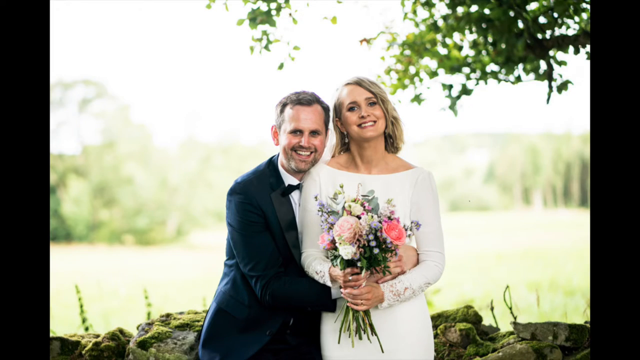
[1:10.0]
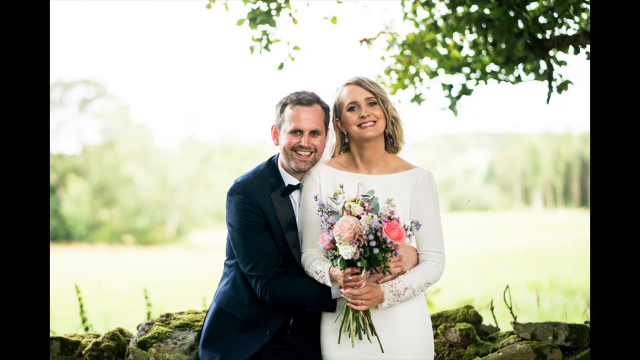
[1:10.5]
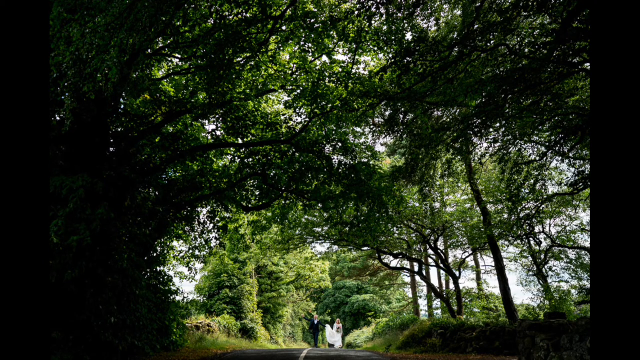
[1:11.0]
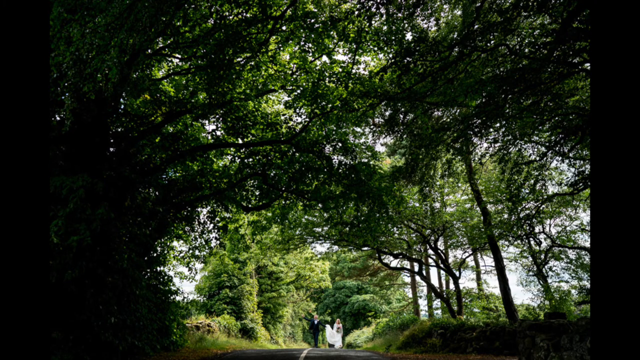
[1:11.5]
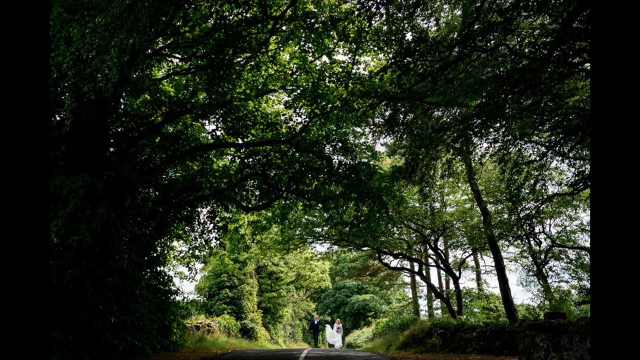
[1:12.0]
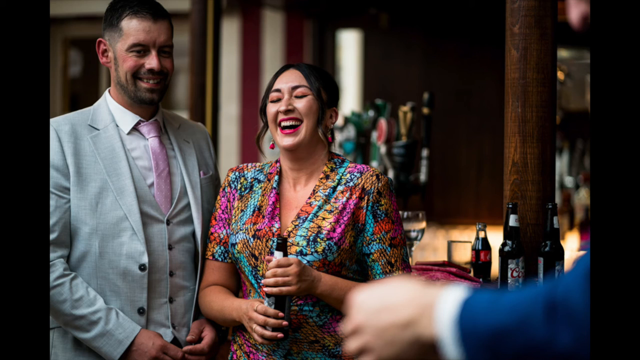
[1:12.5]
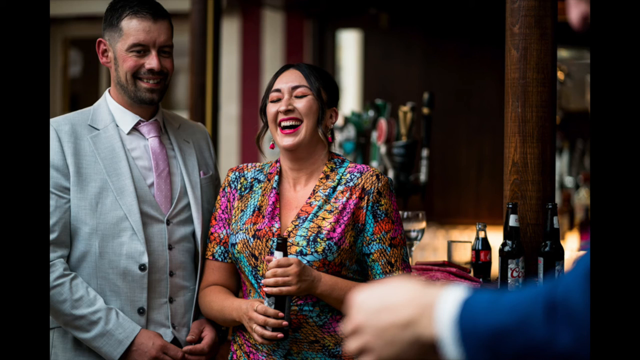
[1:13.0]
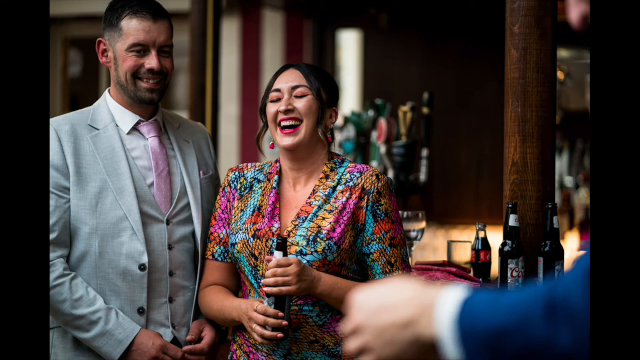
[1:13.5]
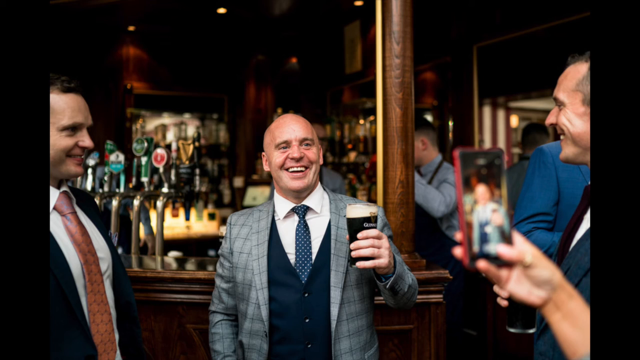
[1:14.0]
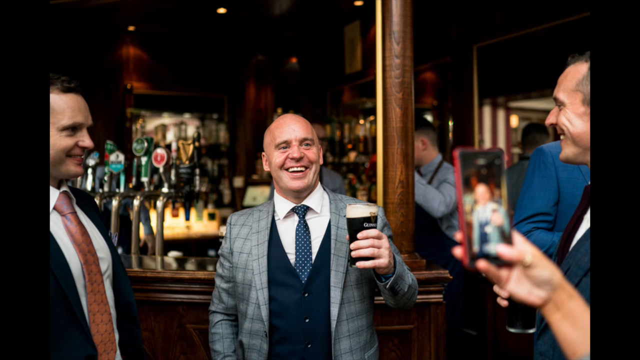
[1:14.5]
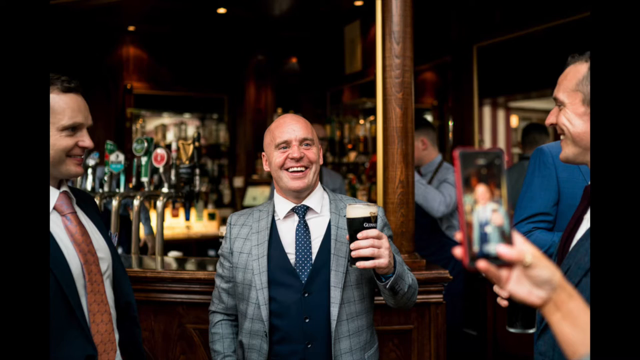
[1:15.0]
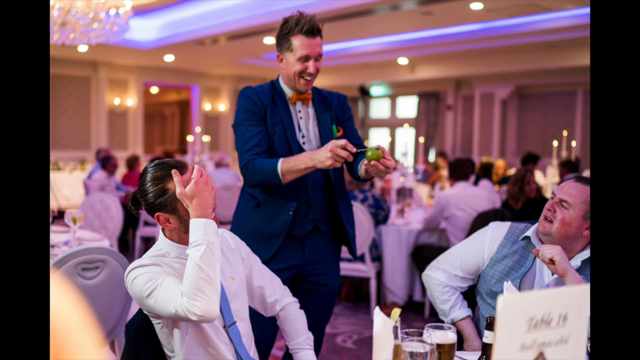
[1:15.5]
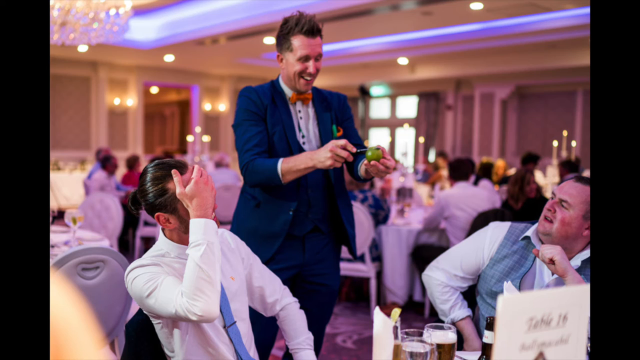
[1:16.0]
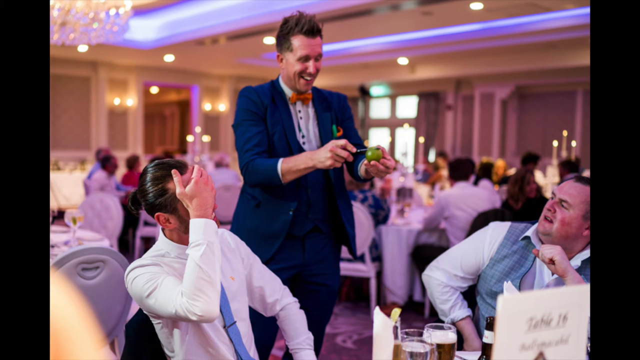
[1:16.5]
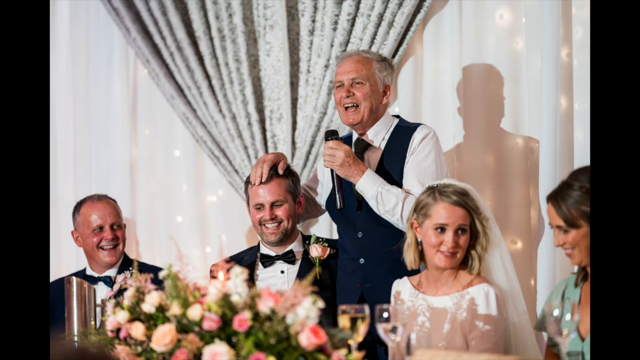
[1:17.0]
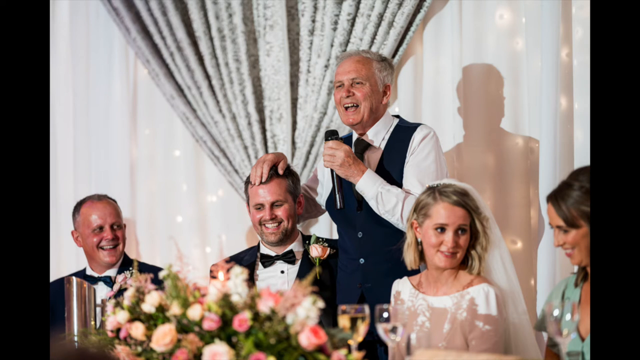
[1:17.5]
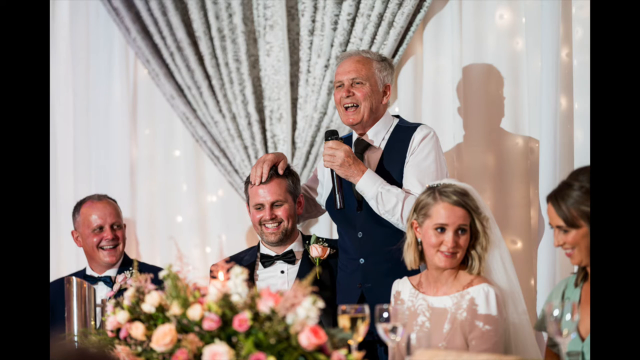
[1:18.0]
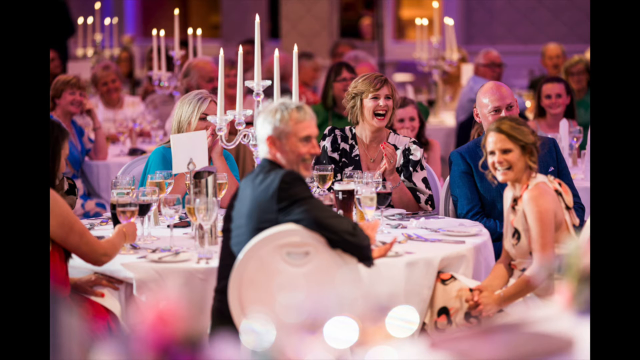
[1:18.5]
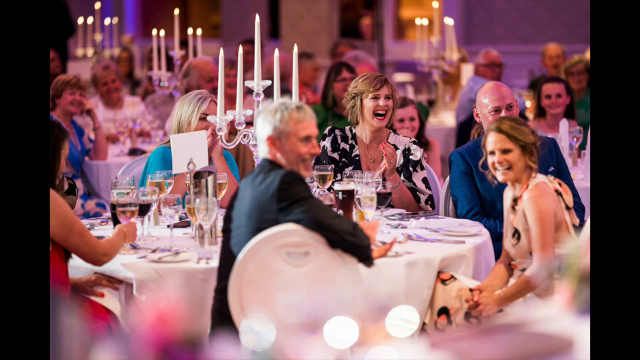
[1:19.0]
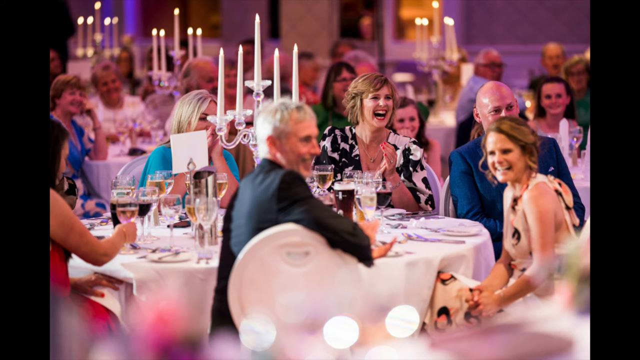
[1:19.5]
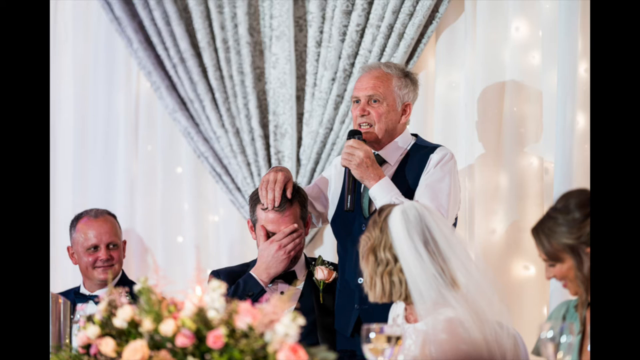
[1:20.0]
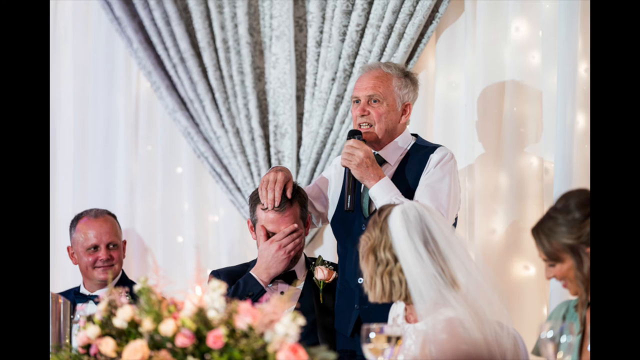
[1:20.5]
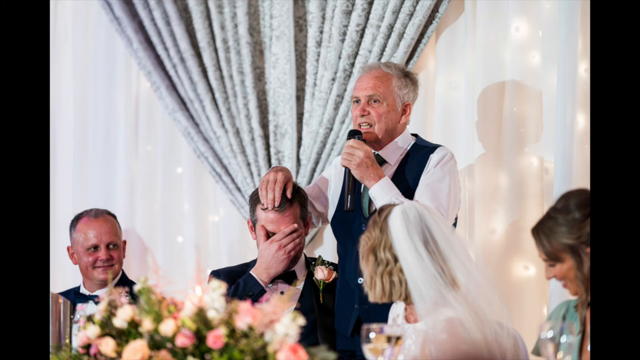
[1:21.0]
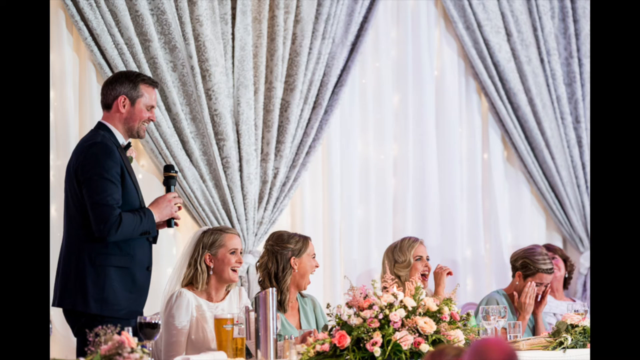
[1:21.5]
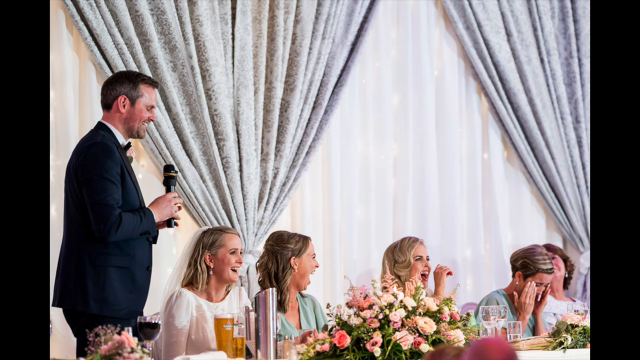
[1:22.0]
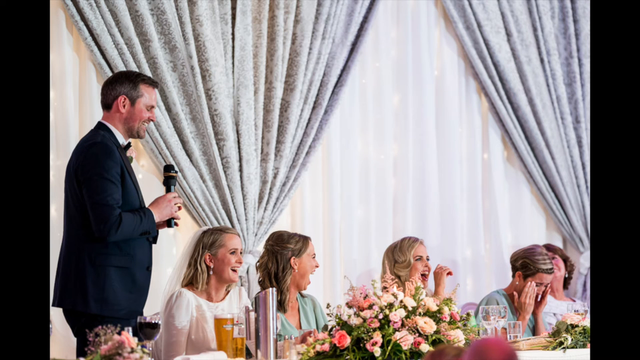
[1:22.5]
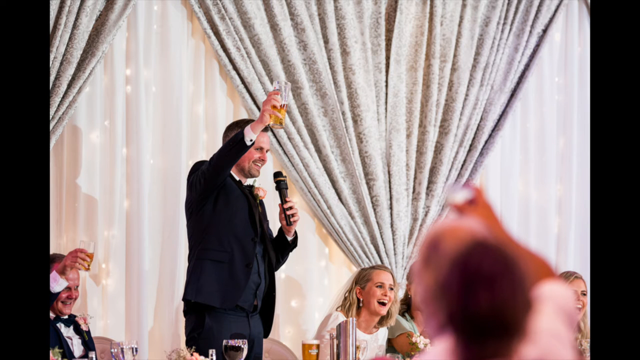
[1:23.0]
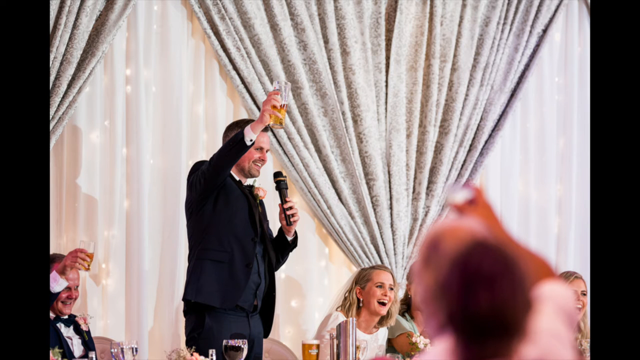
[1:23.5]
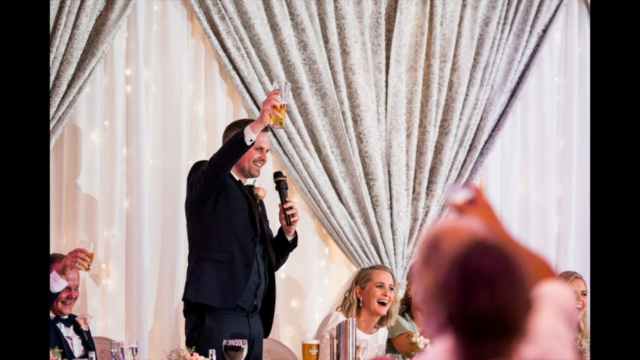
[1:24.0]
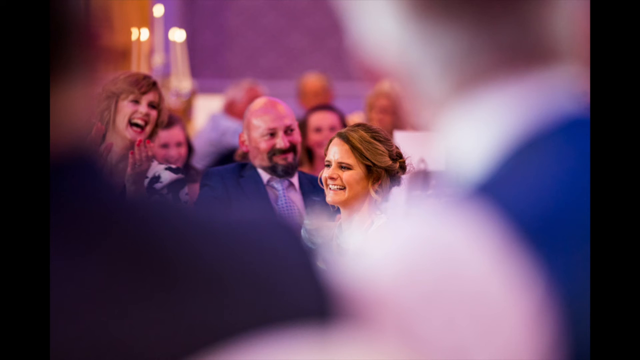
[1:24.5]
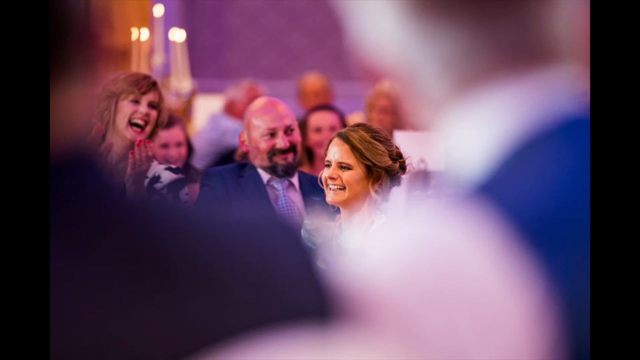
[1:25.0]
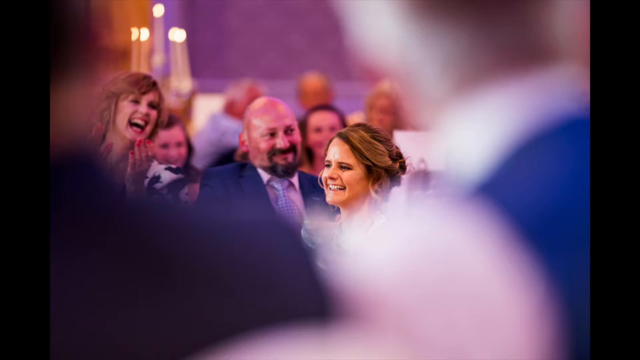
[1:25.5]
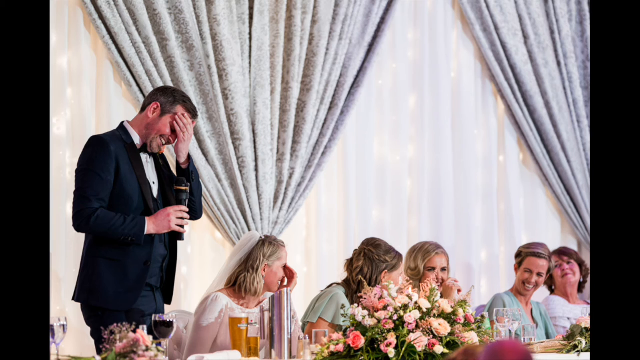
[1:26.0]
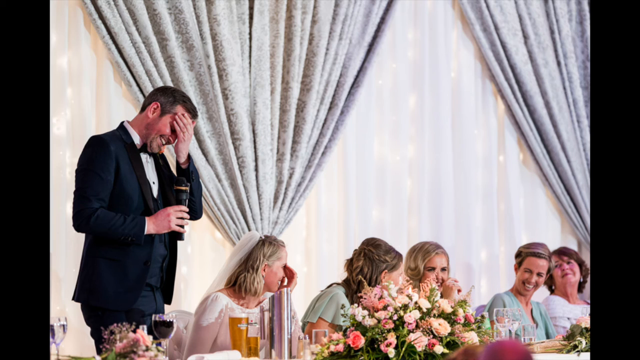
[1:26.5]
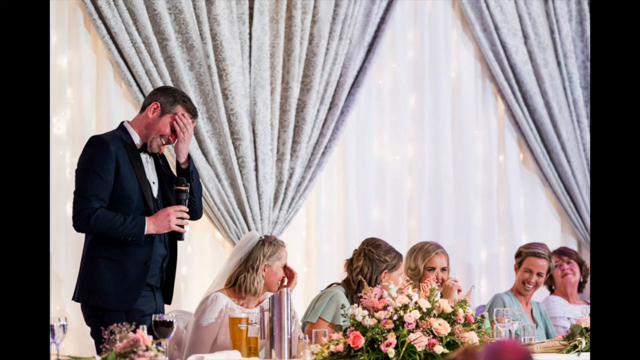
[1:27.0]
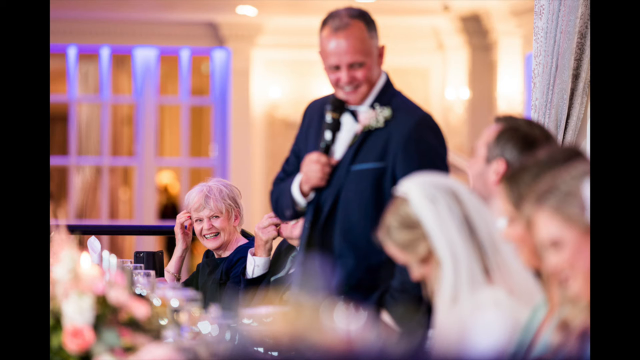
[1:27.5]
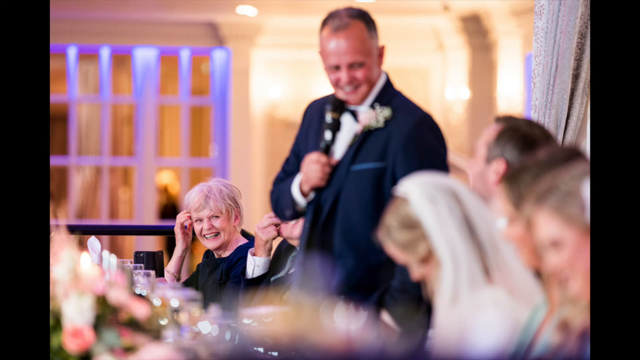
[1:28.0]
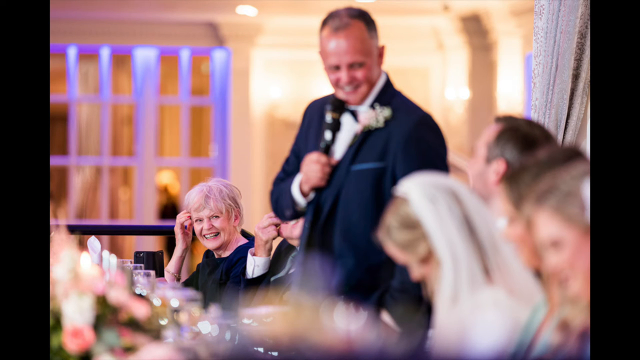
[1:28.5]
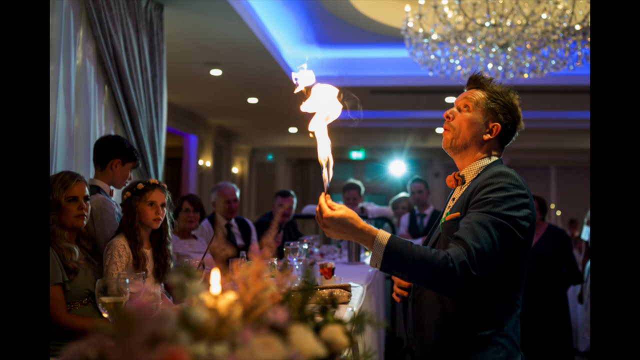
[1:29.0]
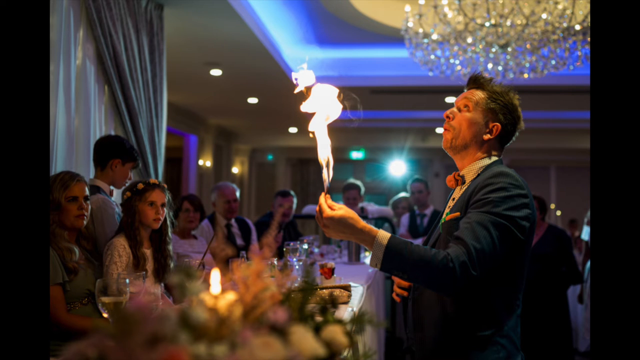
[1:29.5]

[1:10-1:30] After a view of the trees, different scenes from the reception appear. In a pub-like setting, one man has a pint of Guinness. In the reception ballroom, the groom's dad speaks with his hand over his head while everybody laughs and looks on. The guests laugh, seated around the tables. The bridesmaids laugh, the groom toasts, and the groom covers his head in shame. Somebody does what seems to be a magic trick. The bartender creates a flame as everybody looks on; in one of the photos he lights up something green, wearing a blue suit and a red bow tie. All the tables are decorated with candelabra-like holders with white taper candles and white tablecloths, with white linen draped along the backs of the chairs.